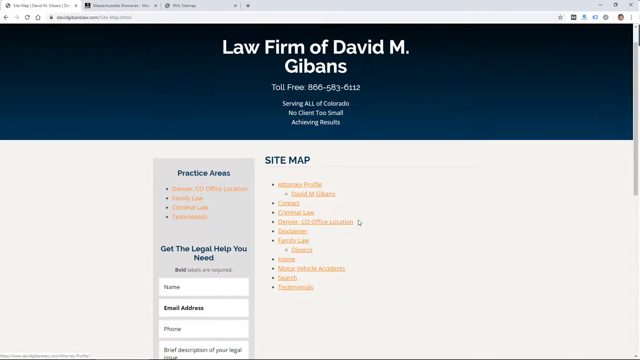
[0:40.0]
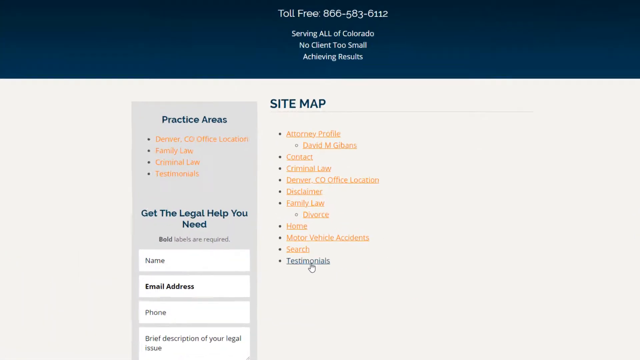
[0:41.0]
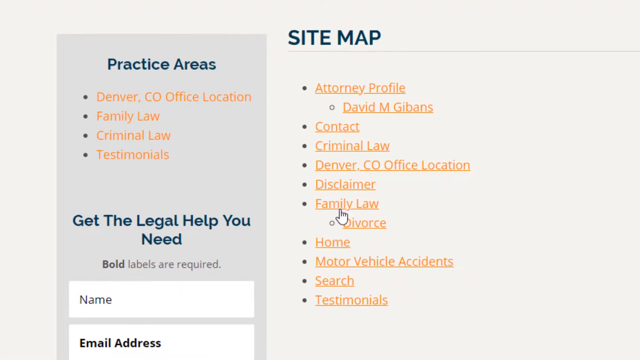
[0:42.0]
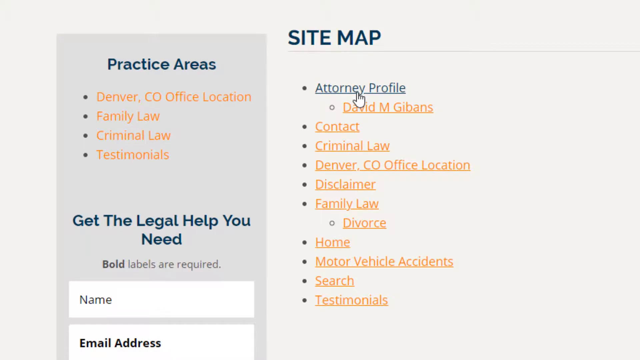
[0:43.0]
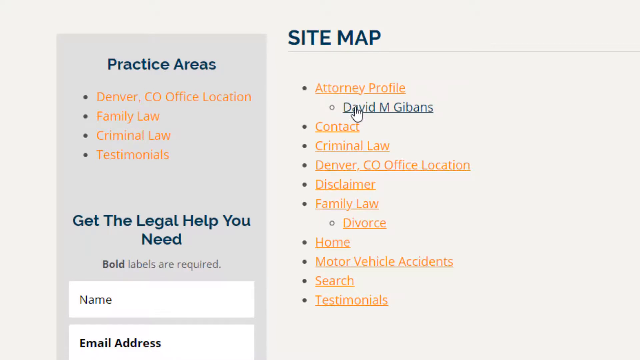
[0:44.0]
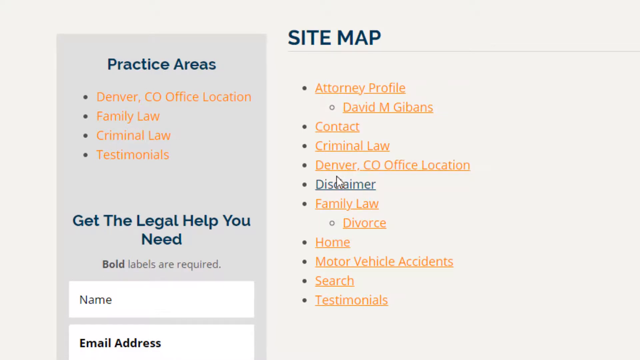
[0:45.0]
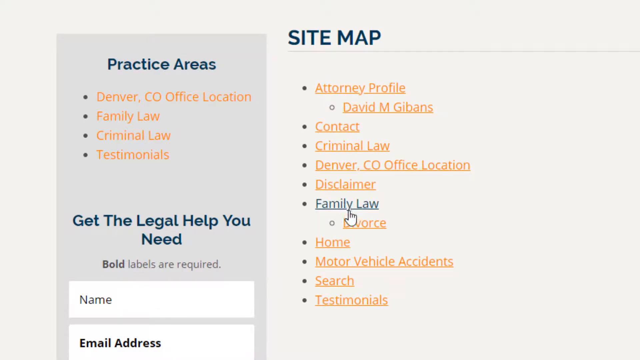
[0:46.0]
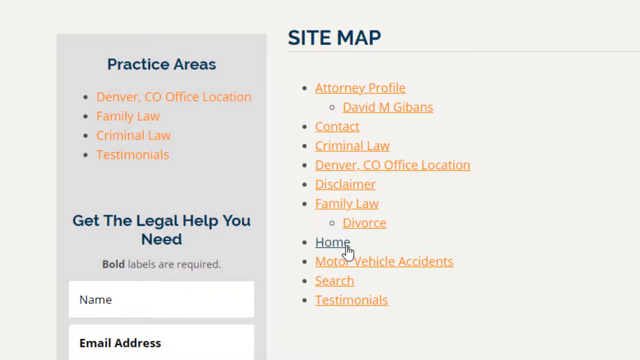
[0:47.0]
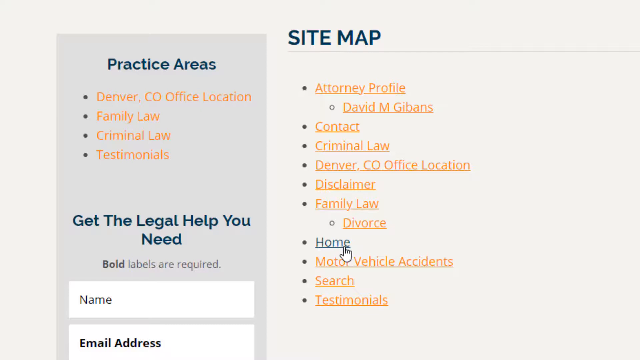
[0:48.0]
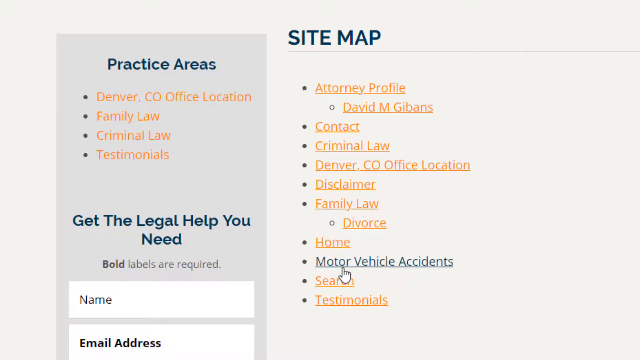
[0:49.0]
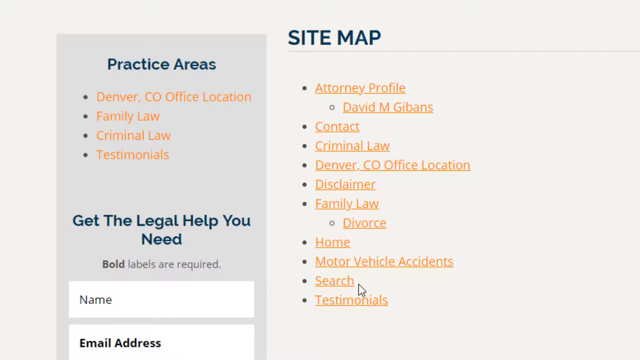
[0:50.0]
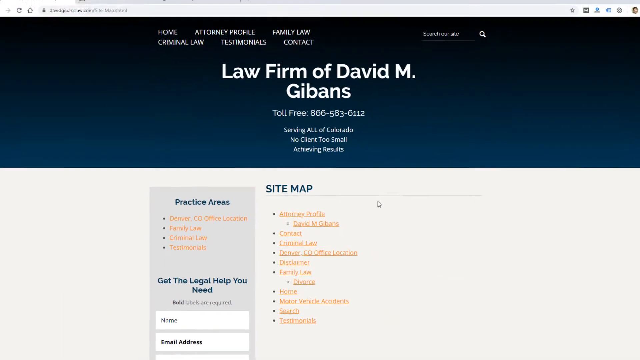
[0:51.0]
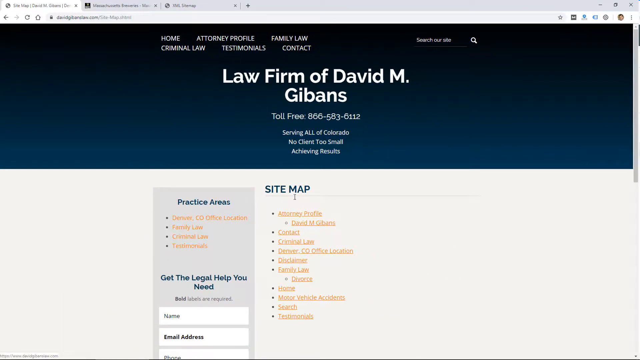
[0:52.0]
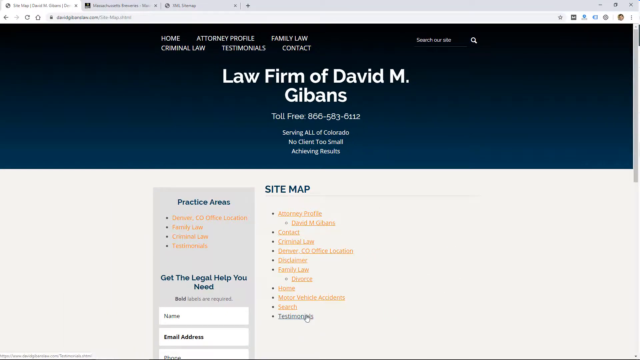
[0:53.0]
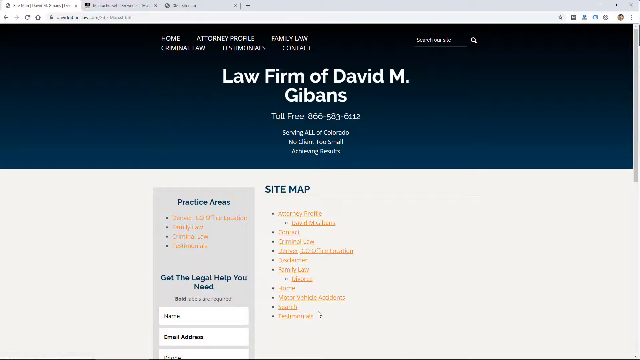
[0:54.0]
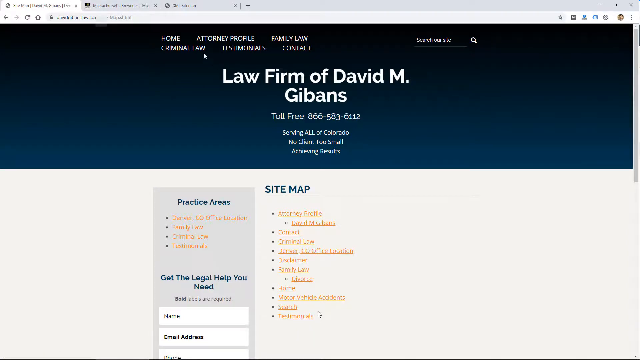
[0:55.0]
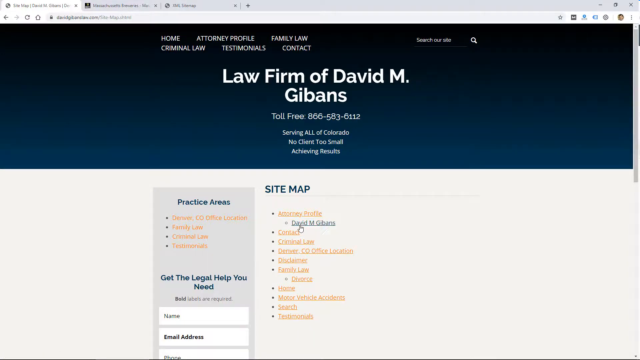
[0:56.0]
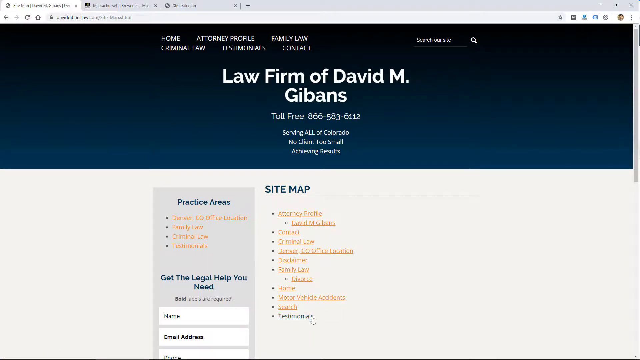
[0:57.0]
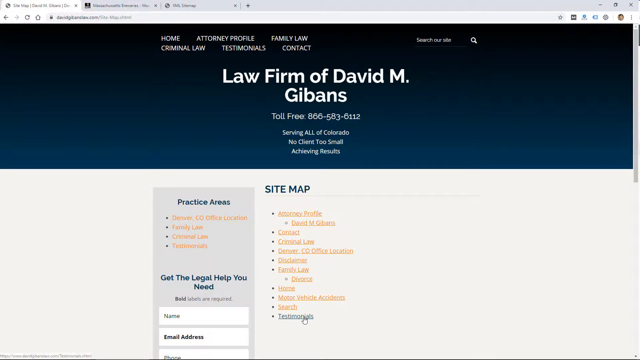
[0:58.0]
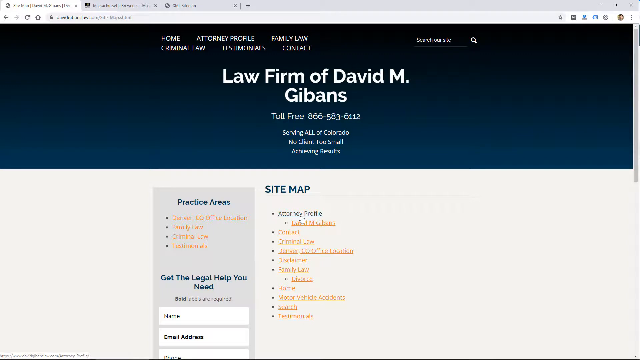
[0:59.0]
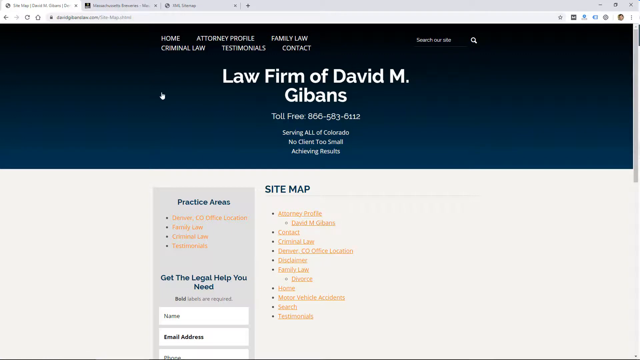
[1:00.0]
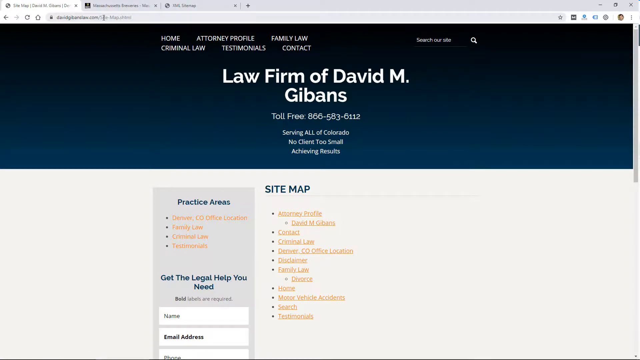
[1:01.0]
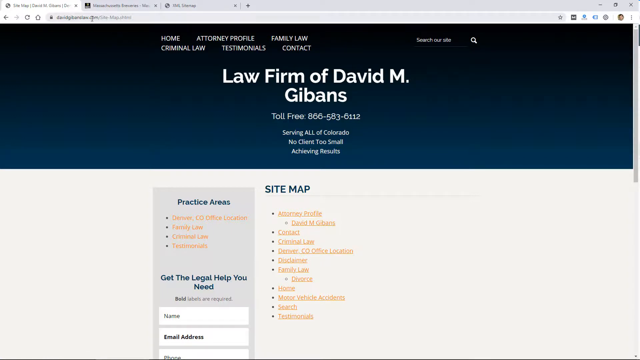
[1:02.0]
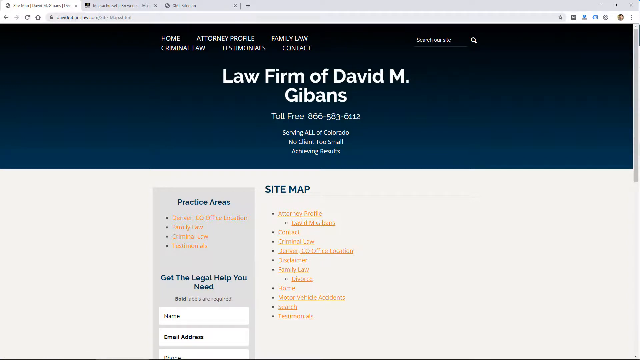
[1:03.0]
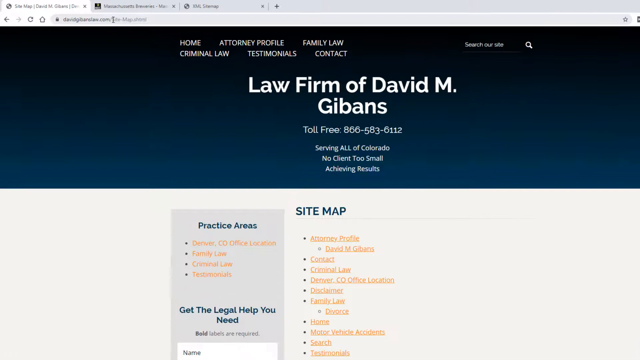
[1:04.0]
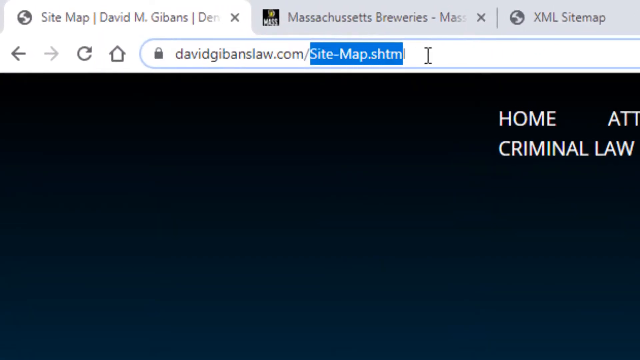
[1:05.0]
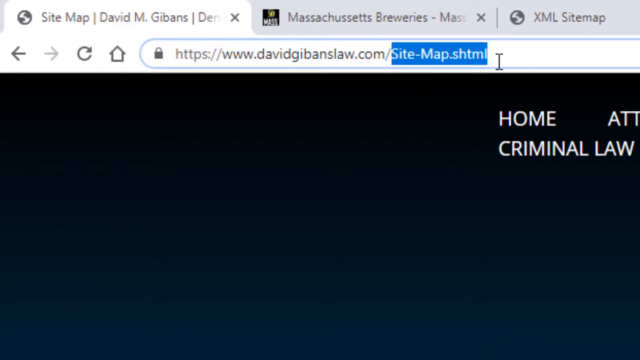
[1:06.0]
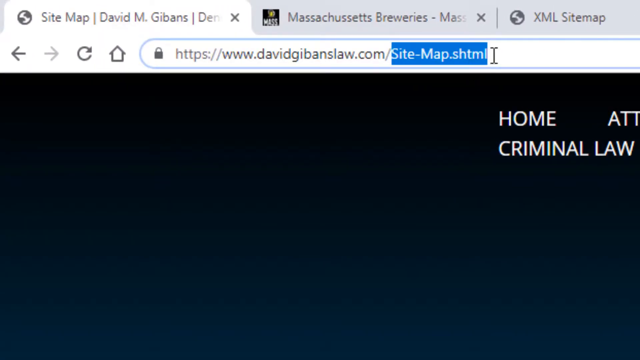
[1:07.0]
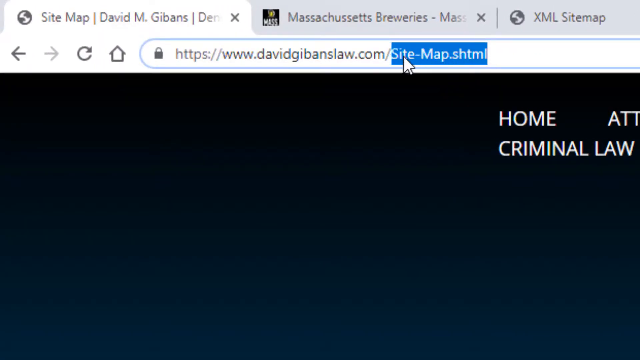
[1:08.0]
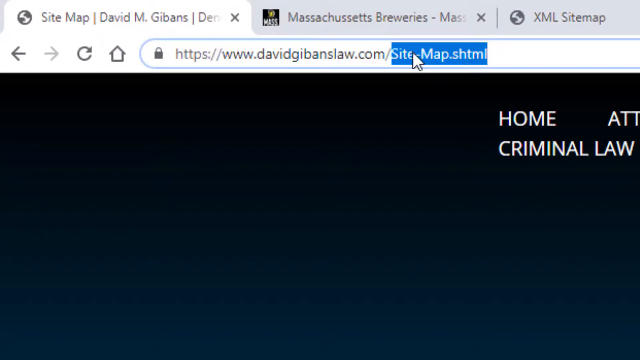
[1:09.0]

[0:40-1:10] A website is shown on a computer with three tabs open at the top. Below the tabs, a blue banner across the screen reads "law firm of David M. Gibbons toll free 800-583-6112." Below that is "sitemap," with a list of clickable items, including "practice area." A white arrow mouse pointer is on the screen. The page scrolls down and zooms in on the sitemap items, and the pointer goes to "attorney profile David M. Gibbons," then scrolls down to "home" and "search." It scrolls back up to the top, moving over the items, goes to the top left, back down to the bottom, and then up to the search bar.